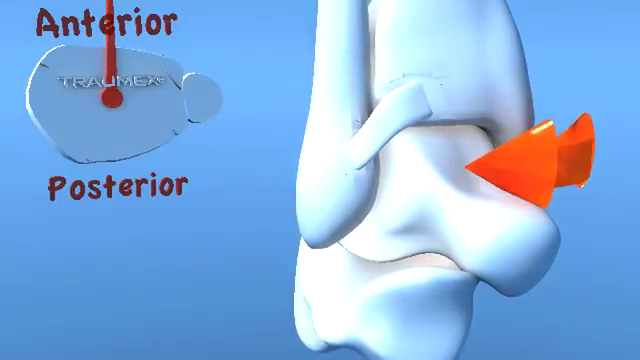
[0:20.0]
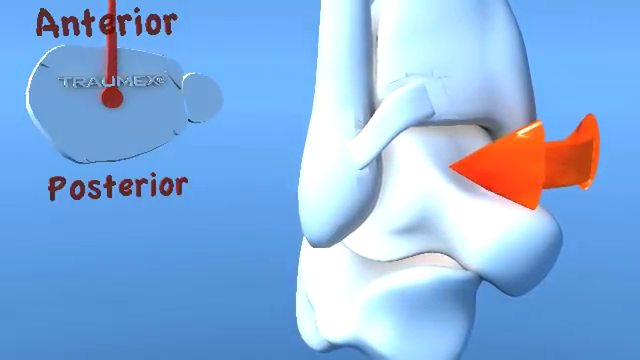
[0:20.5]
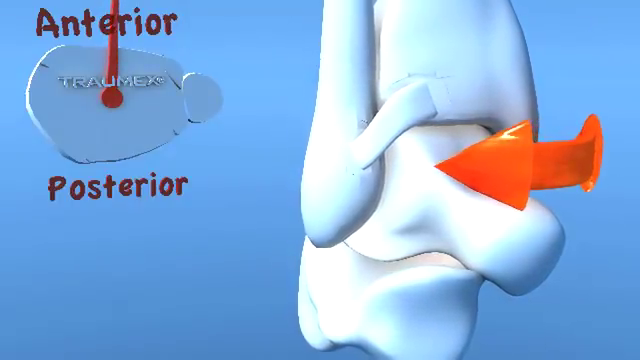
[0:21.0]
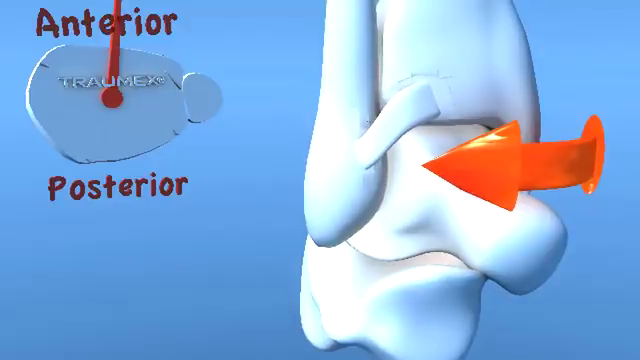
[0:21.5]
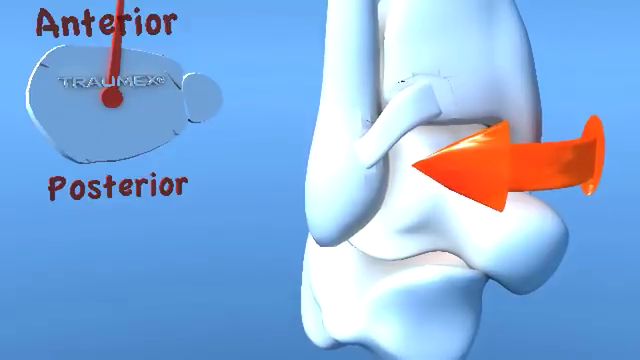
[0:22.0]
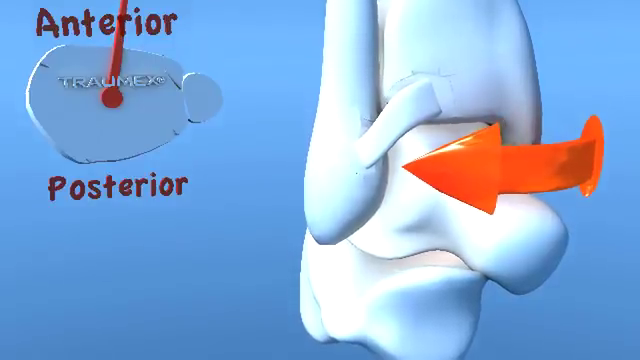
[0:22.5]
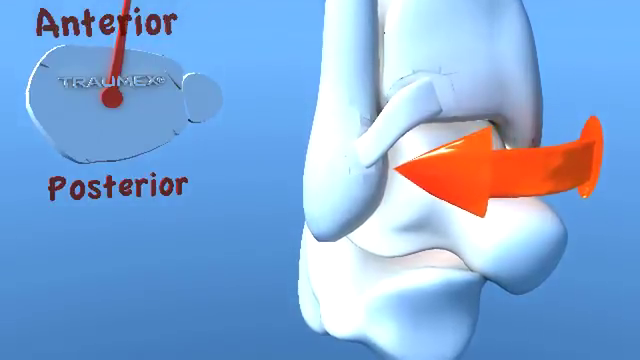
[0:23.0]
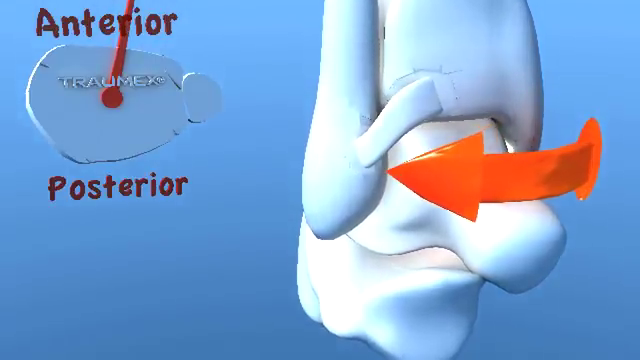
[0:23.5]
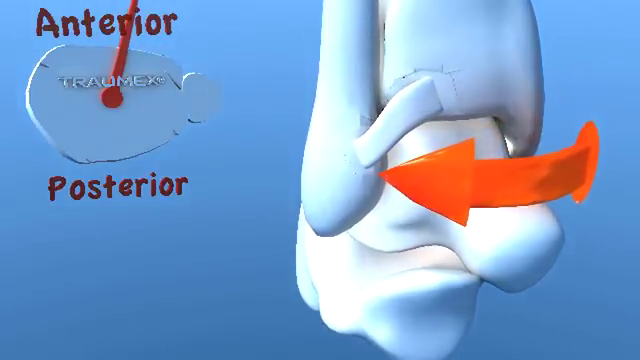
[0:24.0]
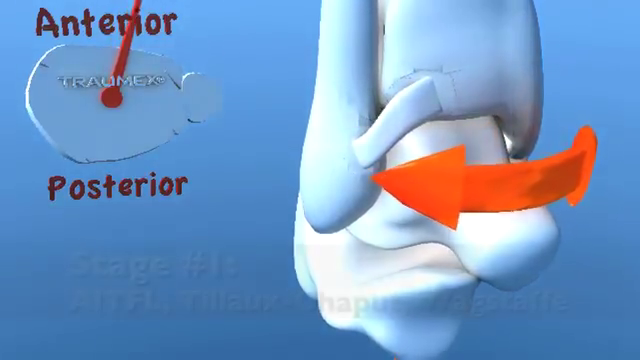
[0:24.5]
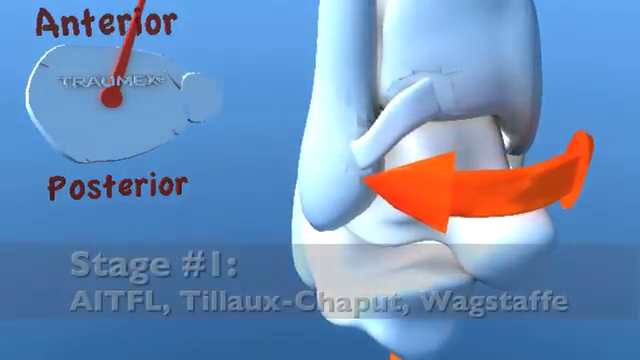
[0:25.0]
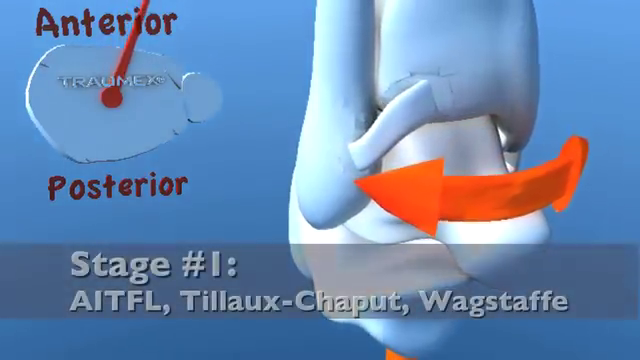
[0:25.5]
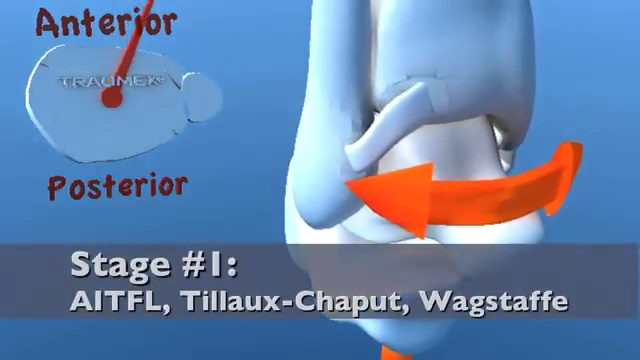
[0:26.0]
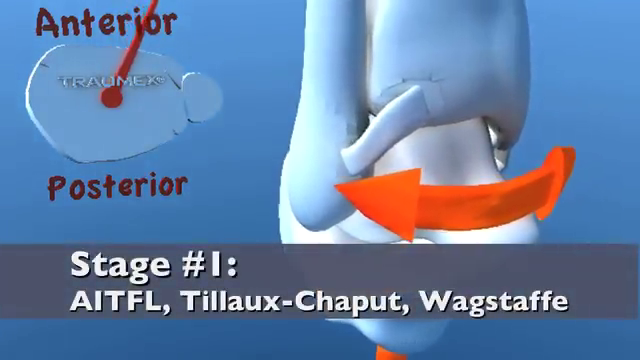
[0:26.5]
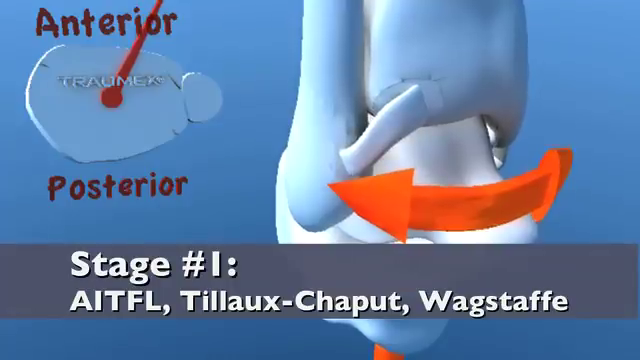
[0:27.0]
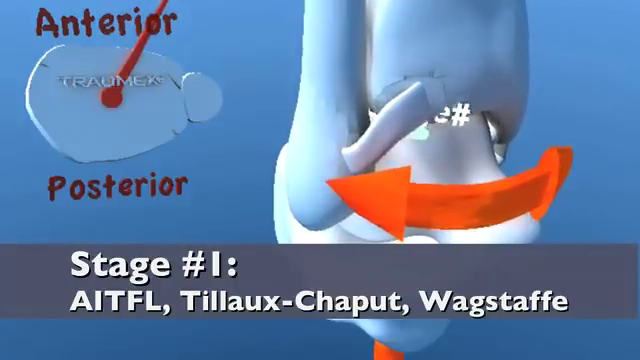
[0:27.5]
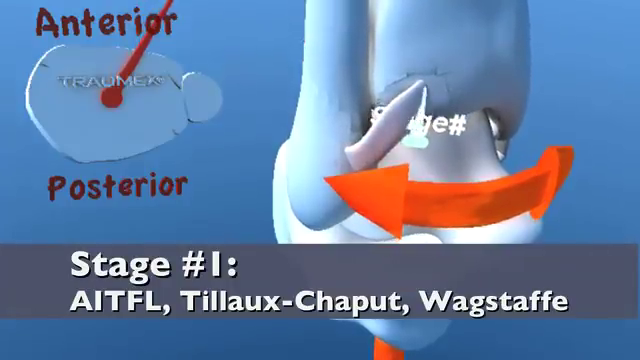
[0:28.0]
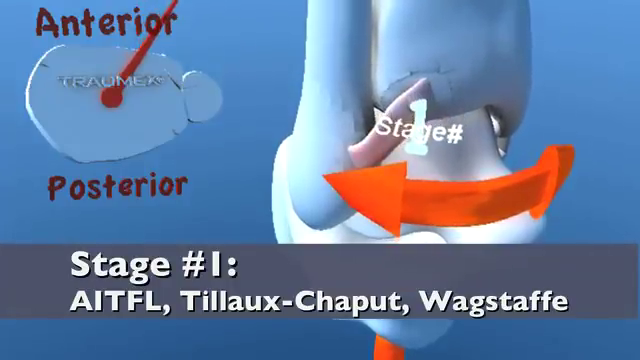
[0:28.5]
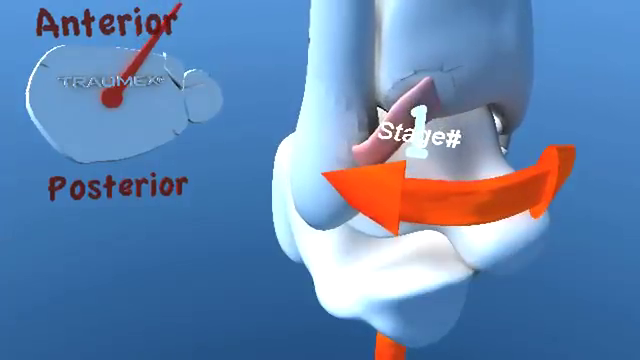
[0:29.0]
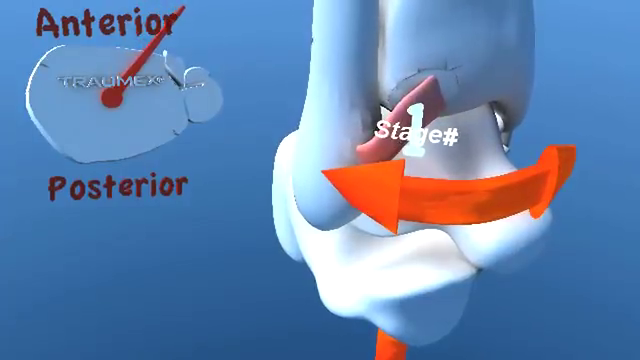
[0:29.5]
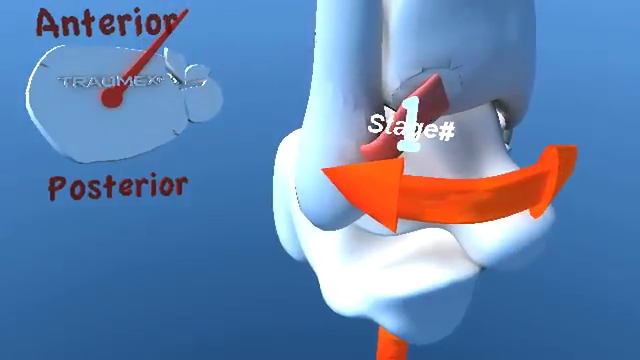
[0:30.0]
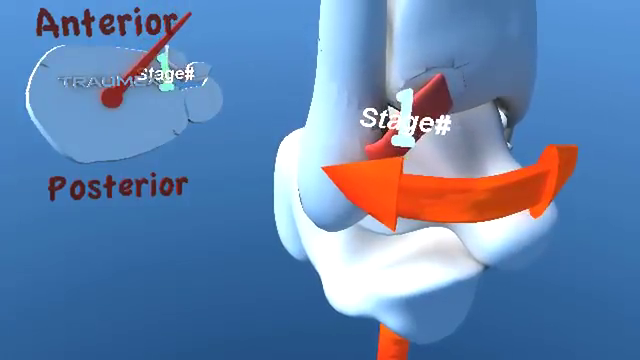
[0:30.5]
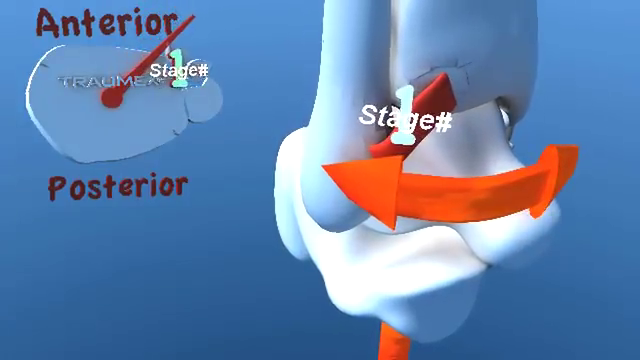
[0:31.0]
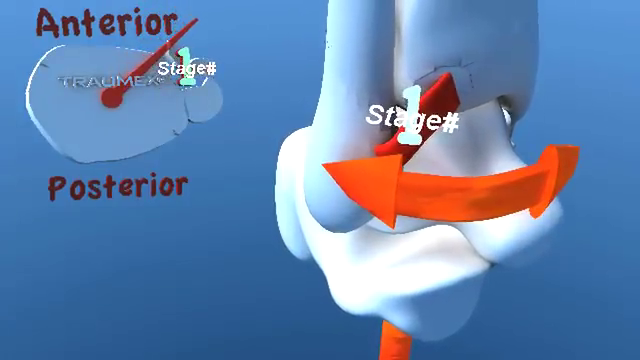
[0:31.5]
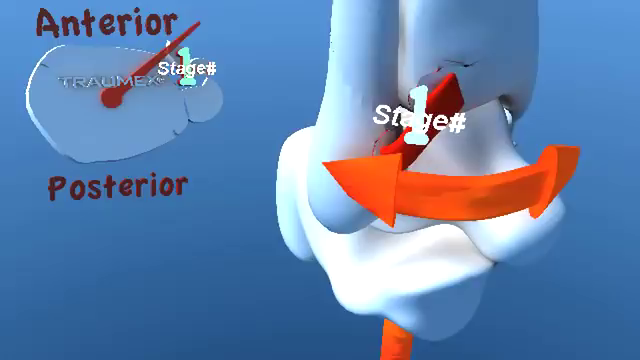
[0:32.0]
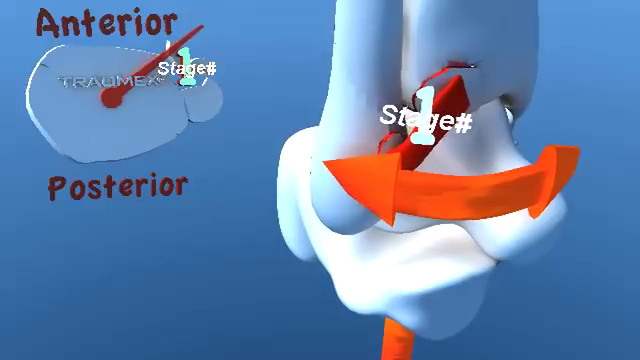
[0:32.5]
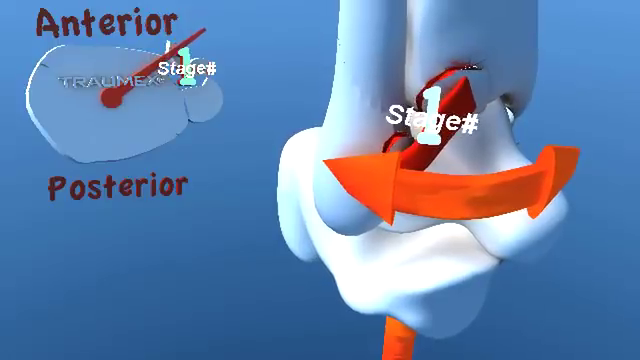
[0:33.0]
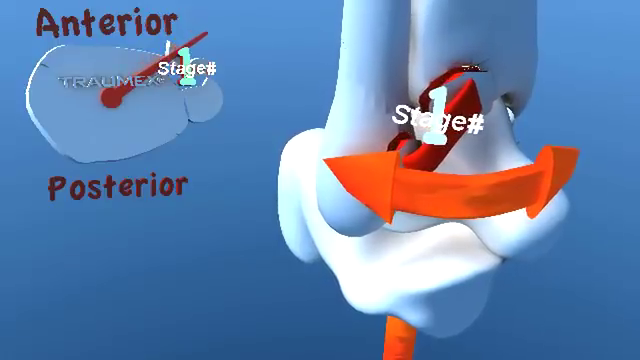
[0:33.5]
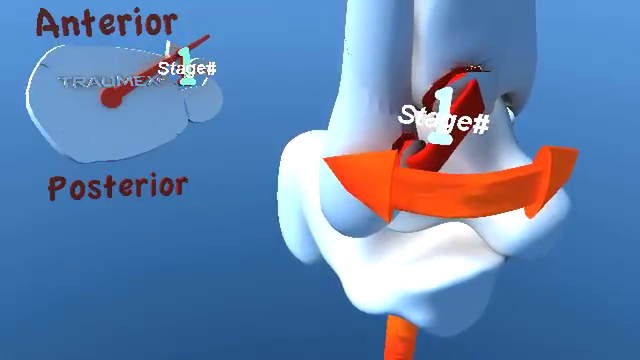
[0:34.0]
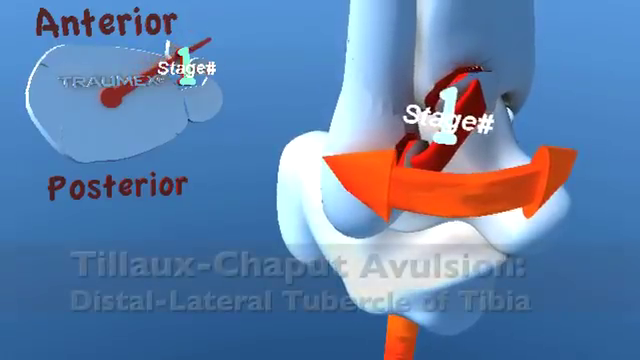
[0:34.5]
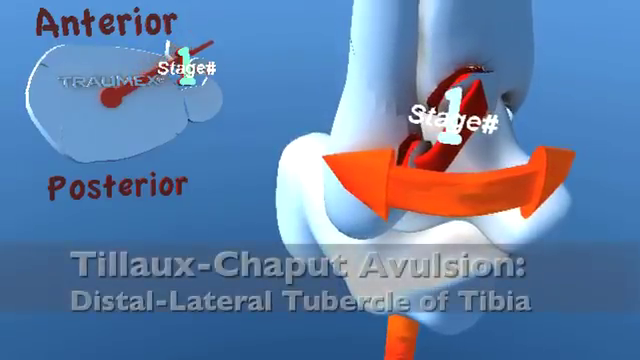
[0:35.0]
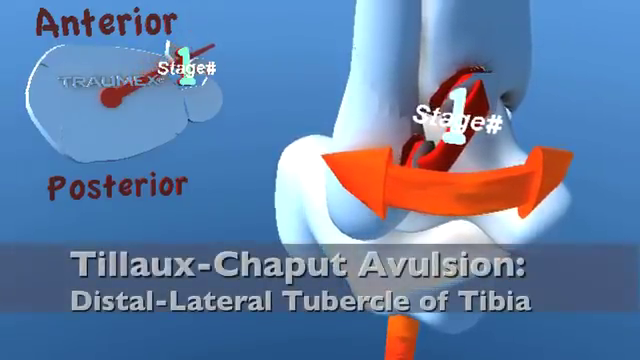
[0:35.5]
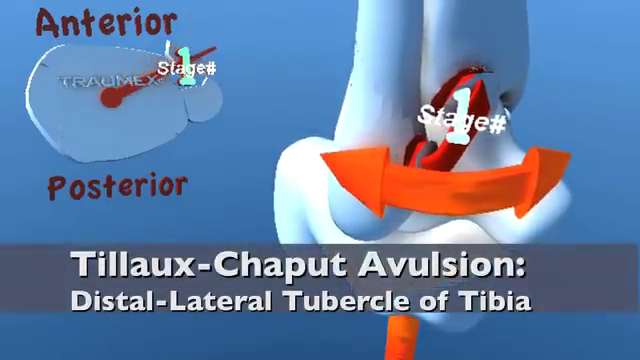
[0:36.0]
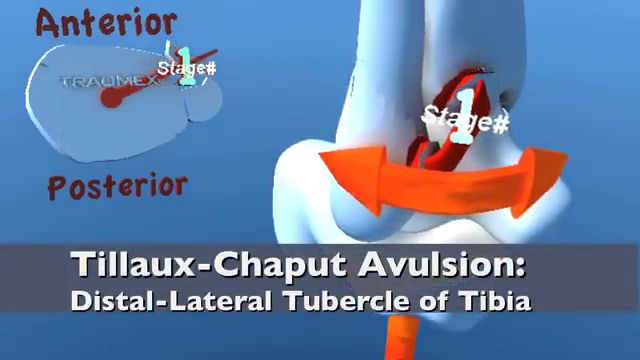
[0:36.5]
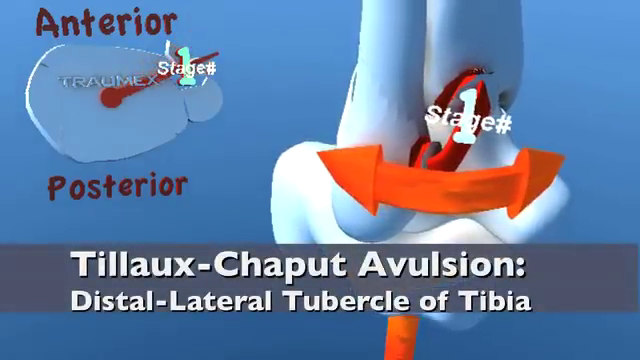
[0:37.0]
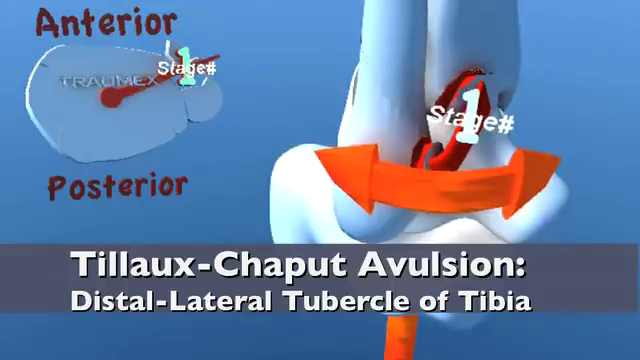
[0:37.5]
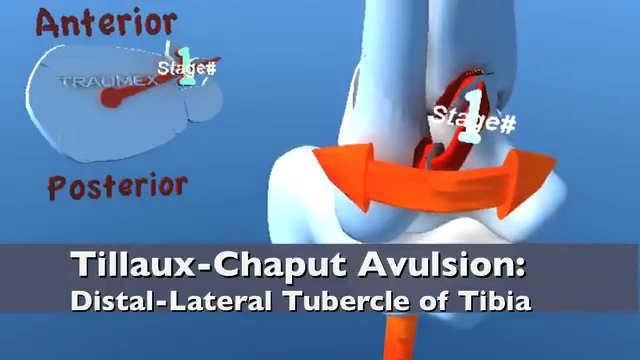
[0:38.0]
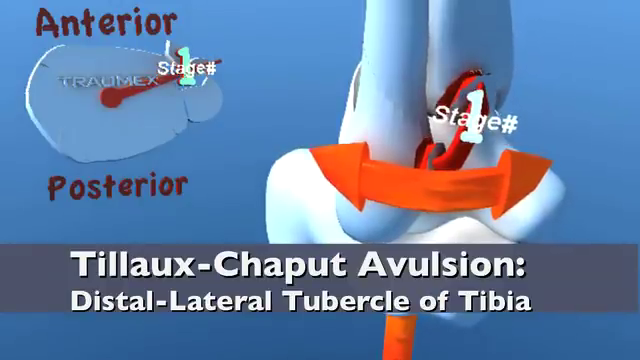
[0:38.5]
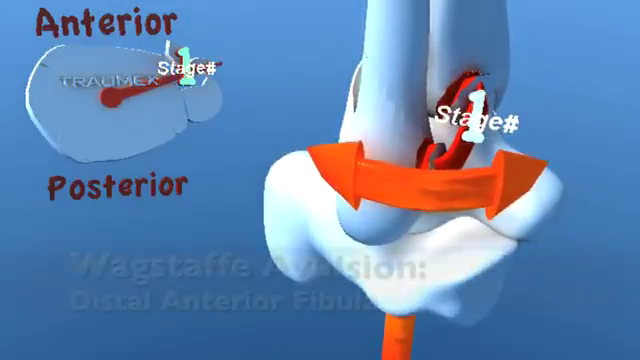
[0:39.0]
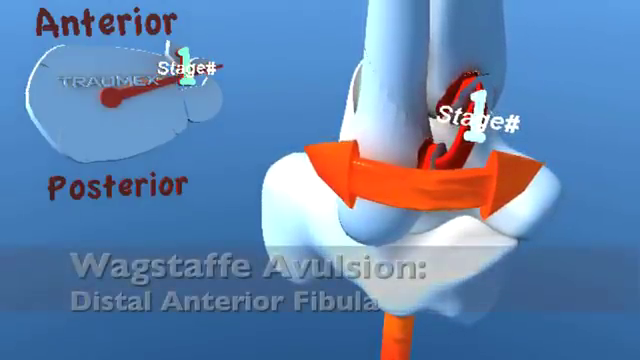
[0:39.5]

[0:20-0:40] The arrow is double-sided, with one arrowhead pointing left and one pointing right, and it falls in line with one of the joints. The arrow then slowly rotates to the left. The camera moves up and focuses above the ankle. A clear blue bar appears at the bottom with white text reading "stage one AITFL, Tillaux-Chaput, Wagstaffe". The number one with the word "stage" appears above the arrow. A tendon on the image begins to turn red, becomes a deep red and spreads. The text at the bottom changes to "Tillaux-Chaput Avulsion: Distal-Lateral Tubercle of Tibia". The arrow continues to rotate around the bone, and the text changes again to "Wagstaff avulsion distal anterior fibula".